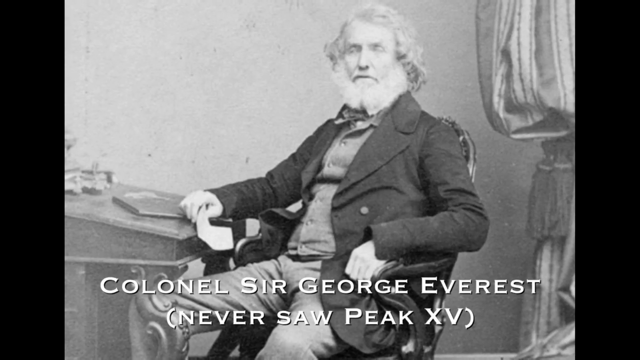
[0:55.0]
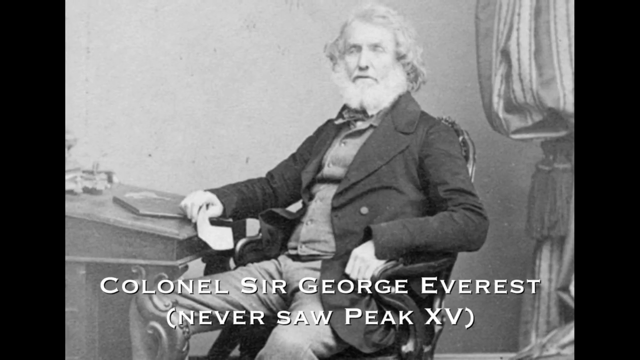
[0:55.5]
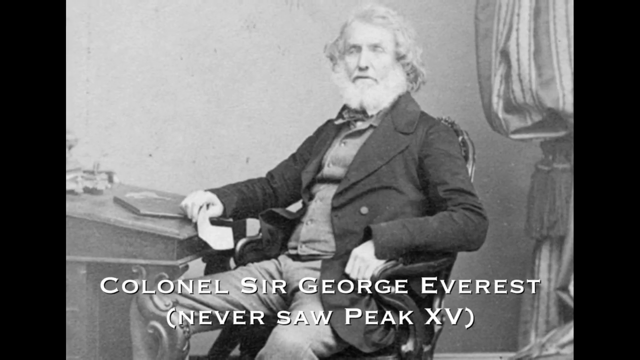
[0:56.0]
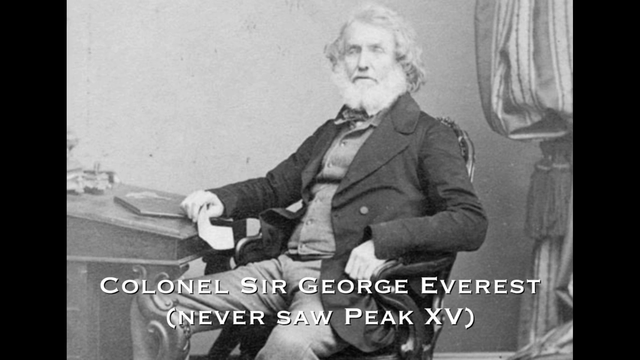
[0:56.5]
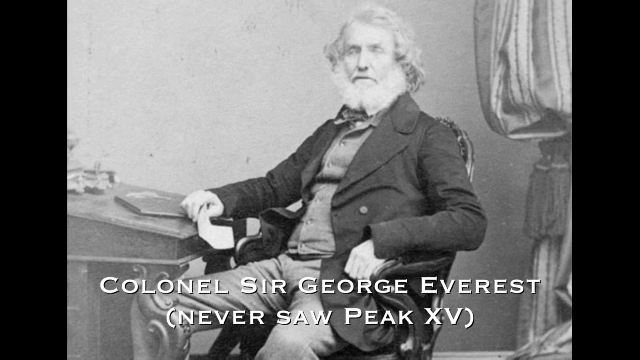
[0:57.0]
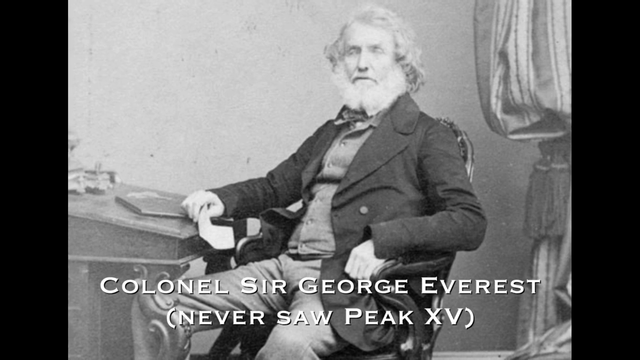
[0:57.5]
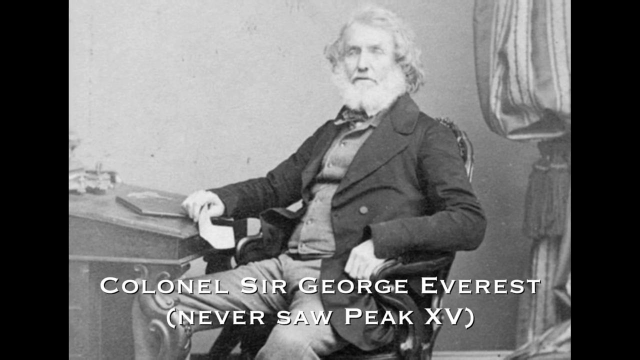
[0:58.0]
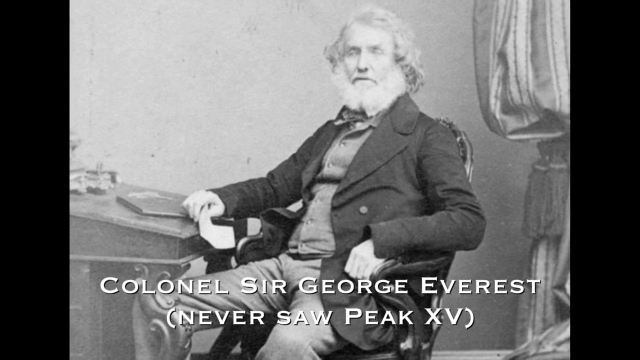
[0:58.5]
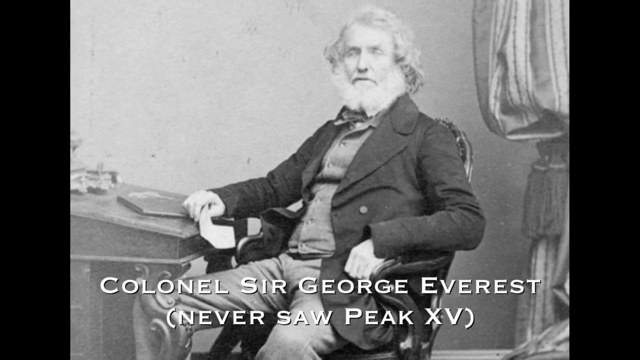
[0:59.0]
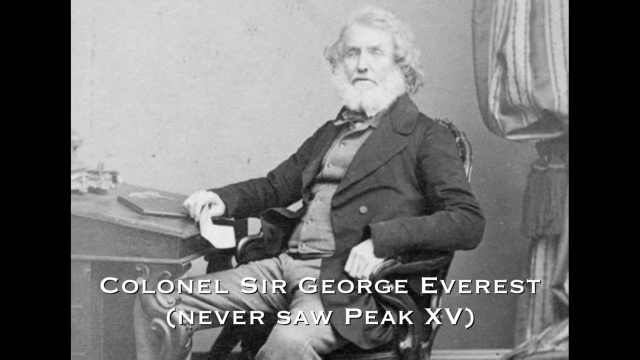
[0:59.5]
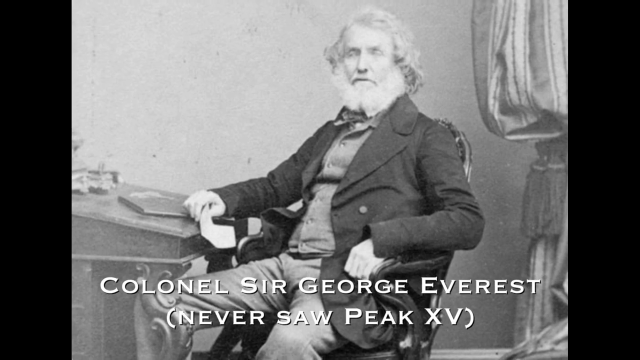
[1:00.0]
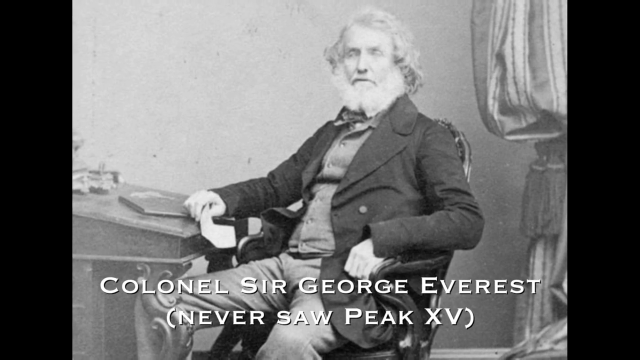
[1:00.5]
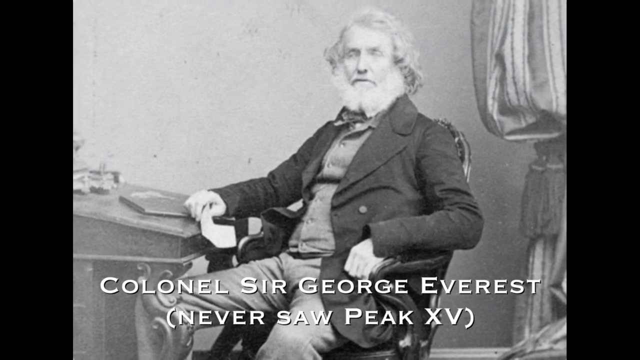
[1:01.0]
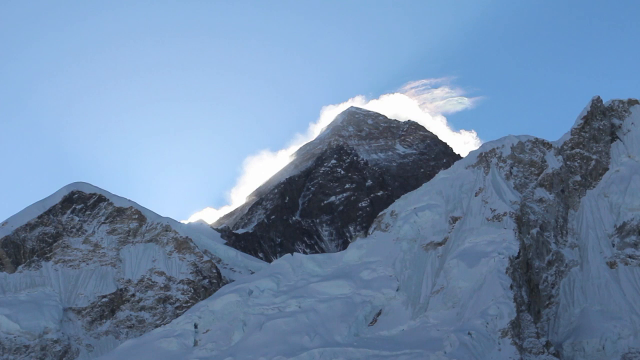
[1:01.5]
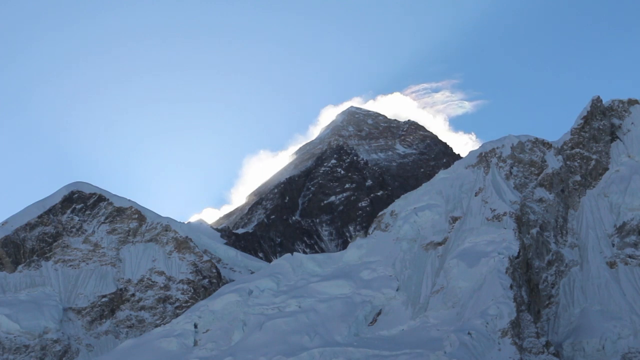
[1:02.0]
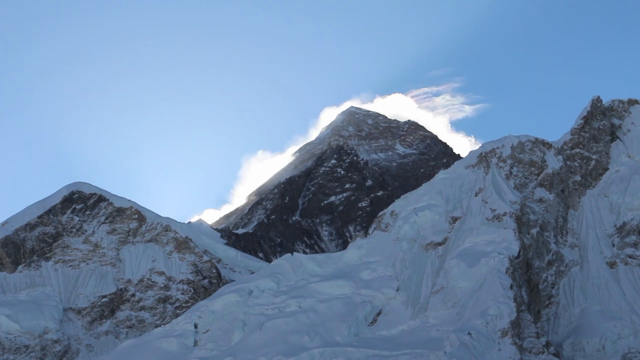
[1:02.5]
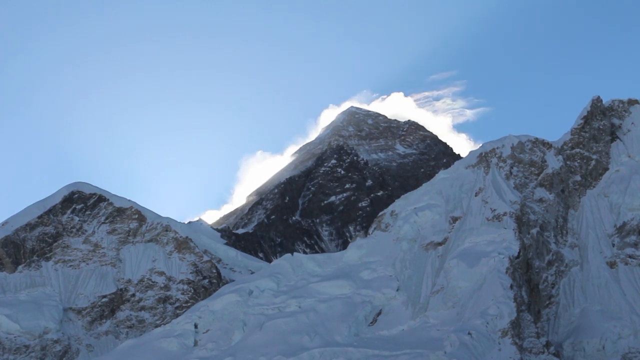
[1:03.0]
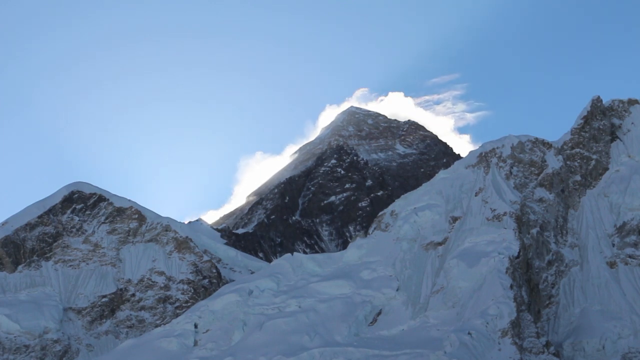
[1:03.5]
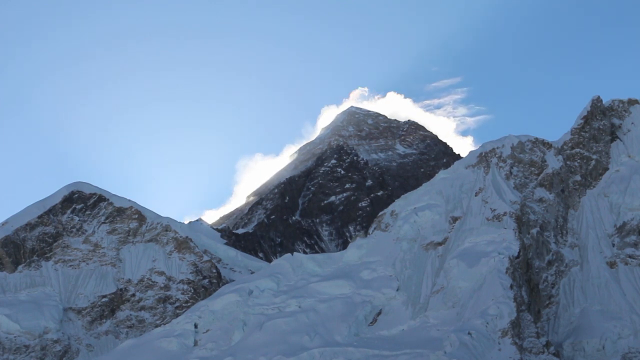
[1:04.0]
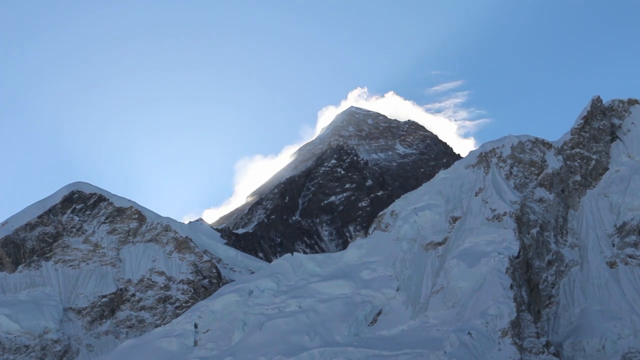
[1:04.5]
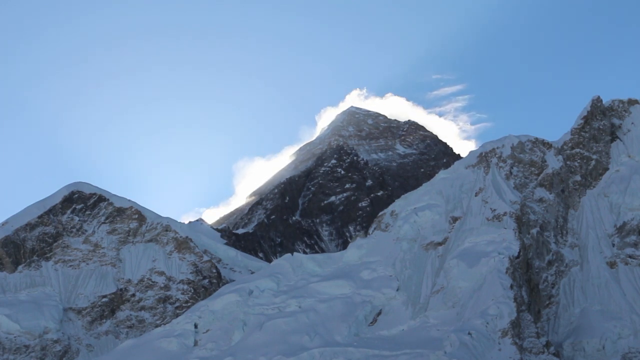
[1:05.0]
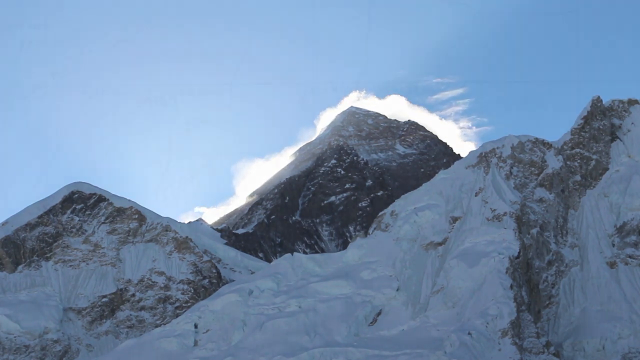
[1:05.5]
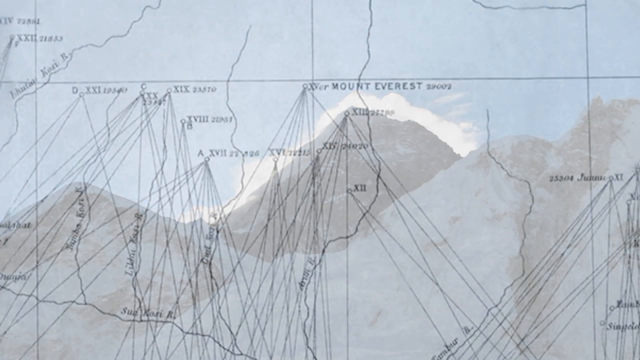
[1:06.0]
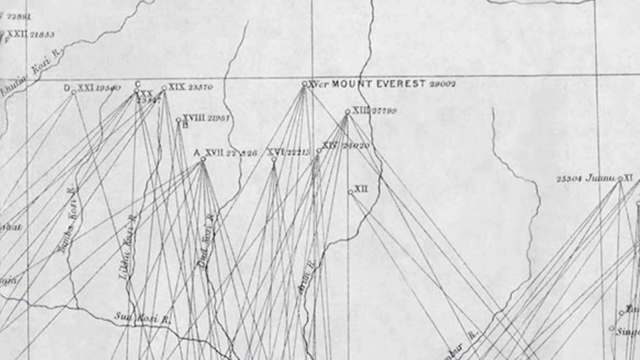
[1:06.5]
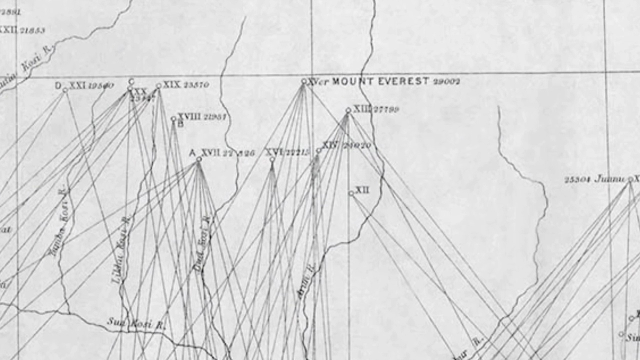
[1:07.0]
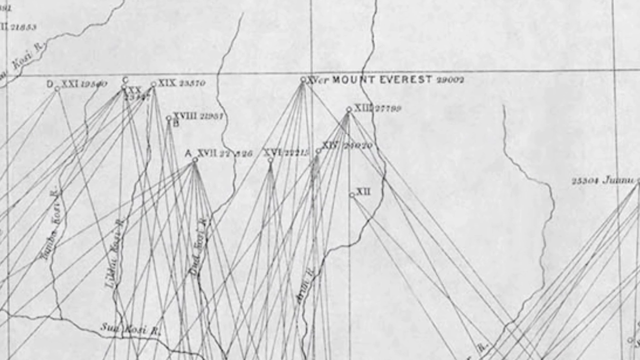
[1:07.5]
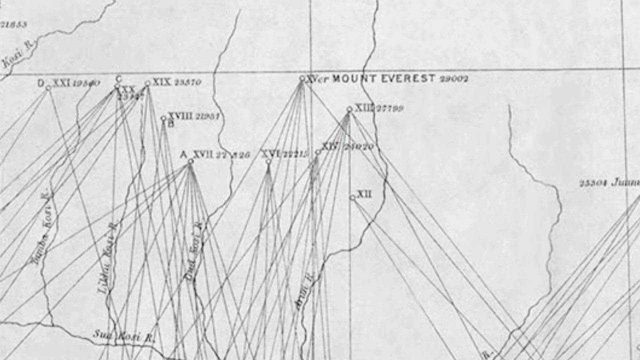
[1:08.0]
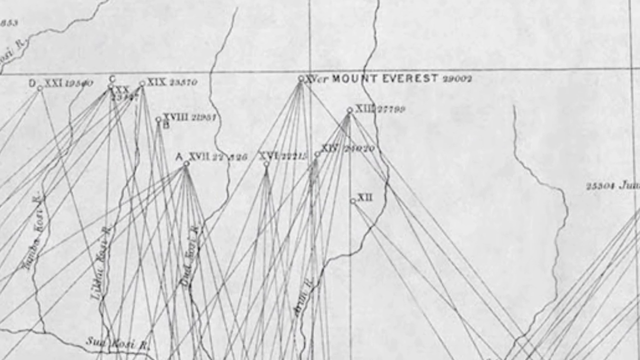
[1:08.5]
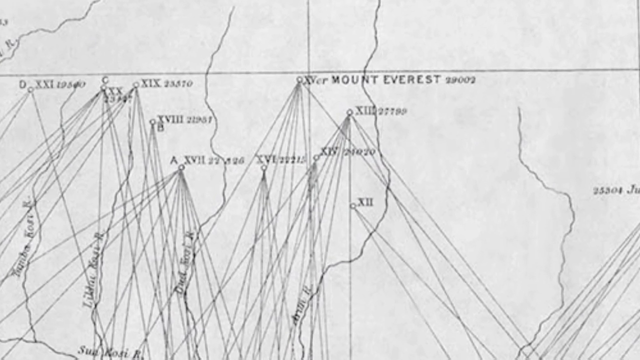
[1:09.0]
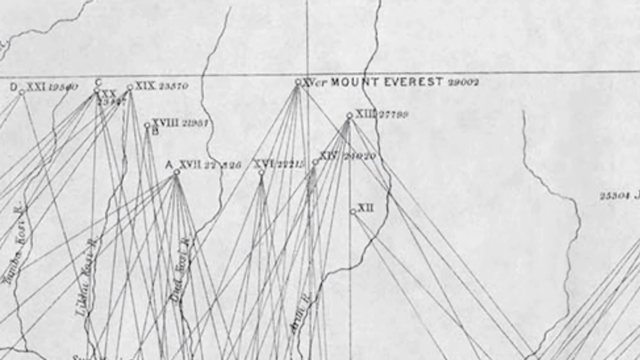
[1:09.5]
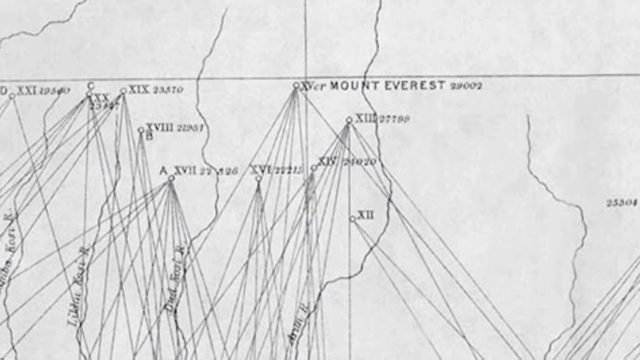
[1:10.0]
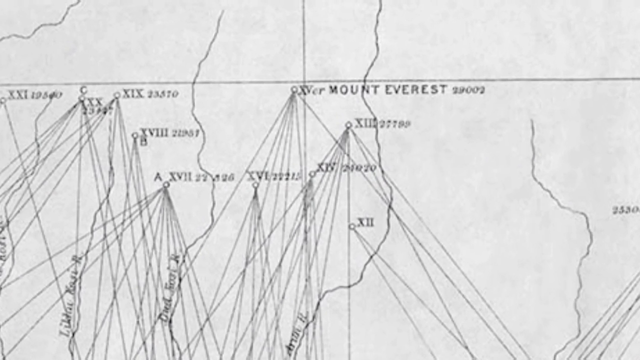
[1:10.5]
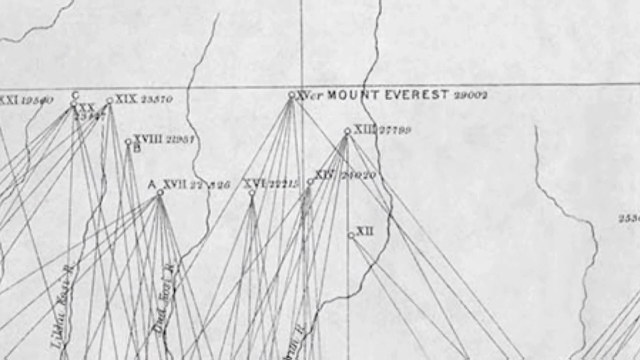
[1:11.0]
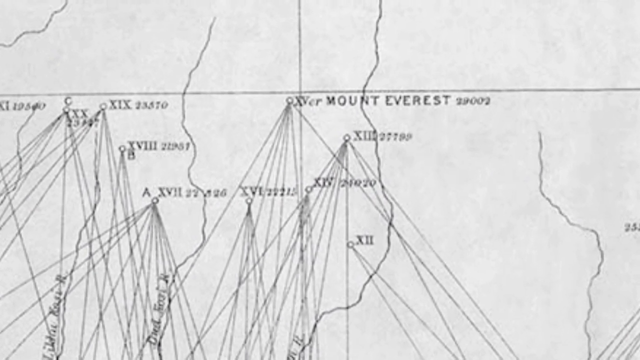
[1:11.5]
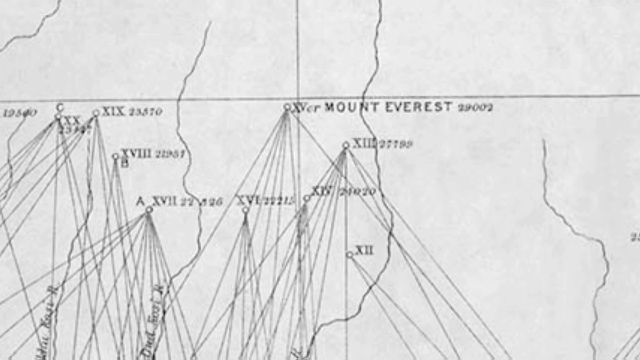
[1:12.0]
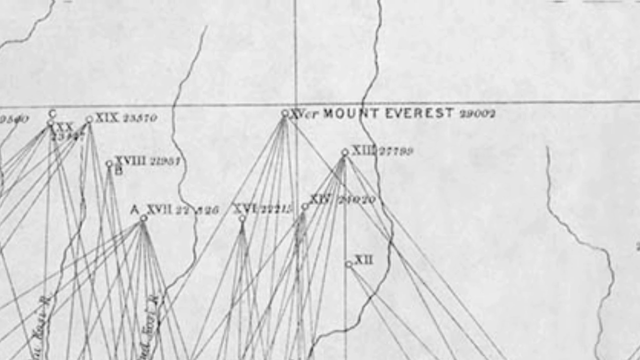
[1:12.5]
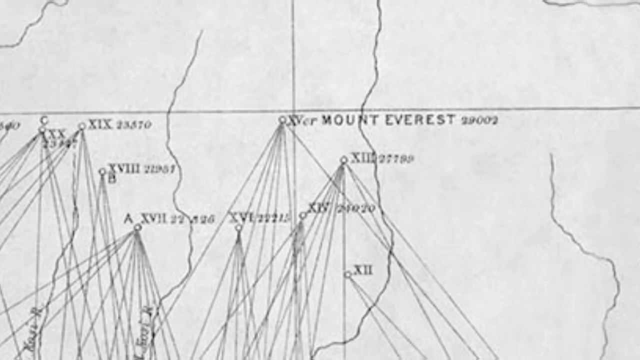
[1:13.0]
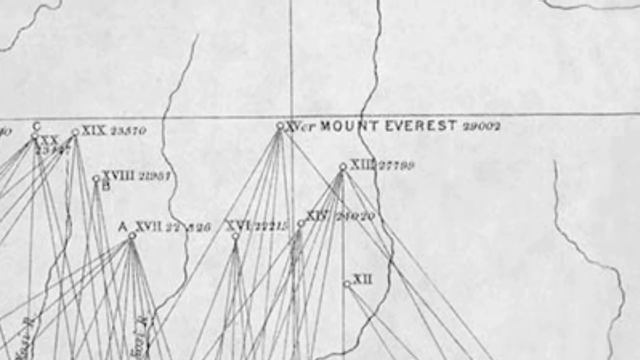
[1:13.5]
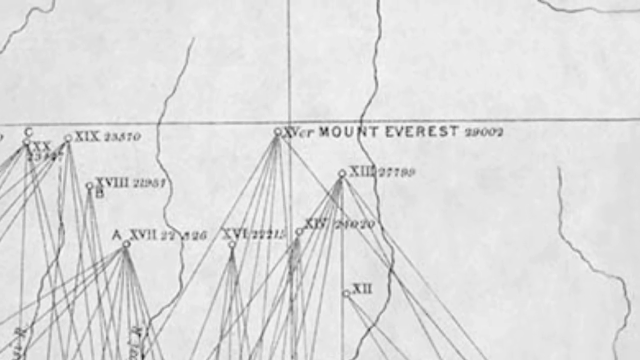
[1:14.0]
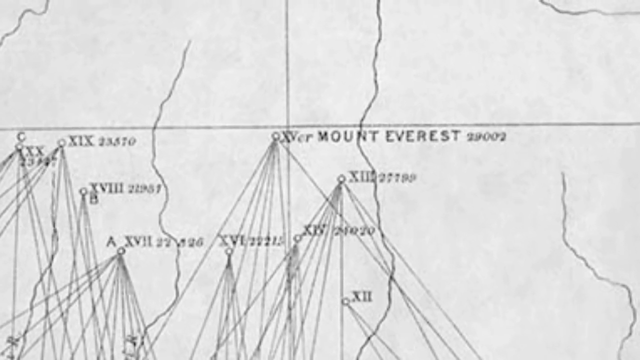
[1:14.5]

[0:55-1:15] A black and white picture of Colonel Sir George Everest sitting in his chair is followed by the mountains with a light blue sky and some white clouds behind them, then the map, with "Mount Everest" clearly labeled at the top. The view sort of zooms in on the white map with black lines toward the words "Mount Everest" in the middle. In his picture, Everest sits in a chair looking at the camera, posing, holding a piece of paper in his right hand and wearing a heavy coat, dressed up in an old-fashioned style. The map has many ruler-drawn lines converging toward Roman numerals, apparently marking peaks, including XIV, XIII, XIX and XXI. His image is labeled "Colonel Sir George Everest" with "(never saw peak XIV)" beneath, and the video goes back and forth between him and the map.